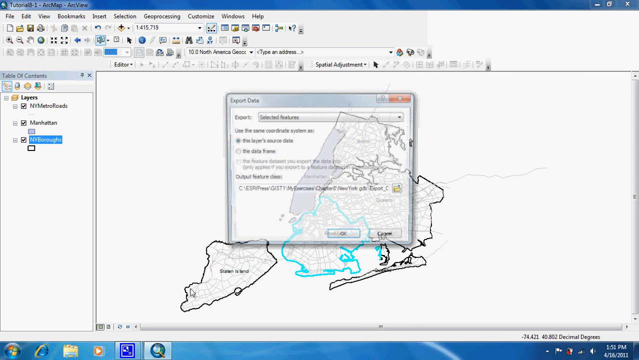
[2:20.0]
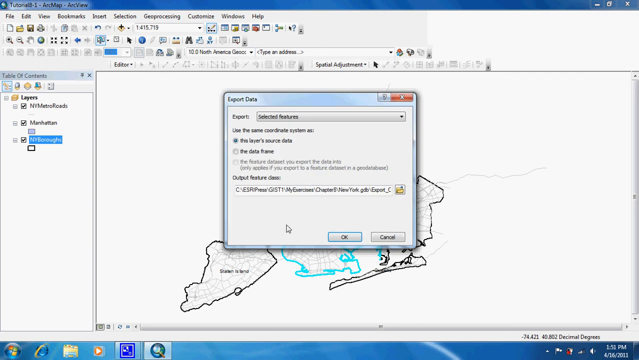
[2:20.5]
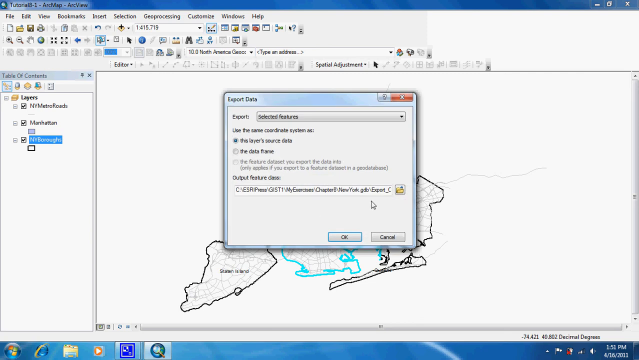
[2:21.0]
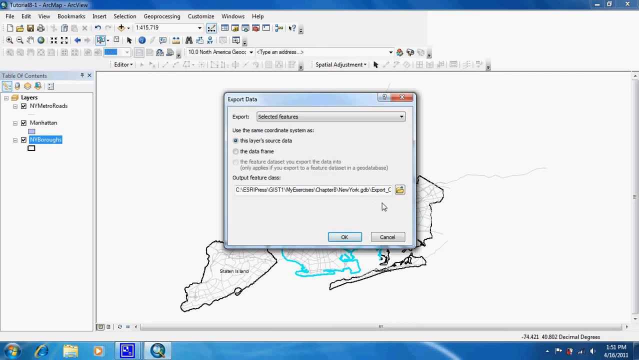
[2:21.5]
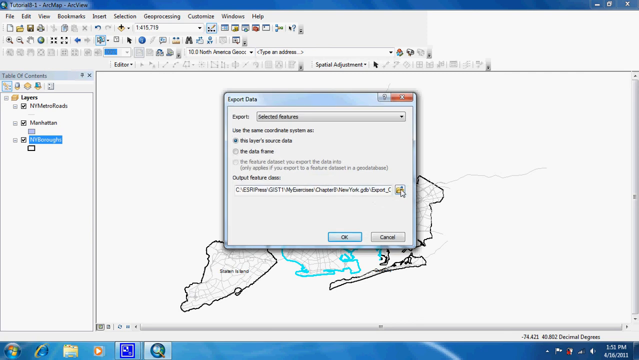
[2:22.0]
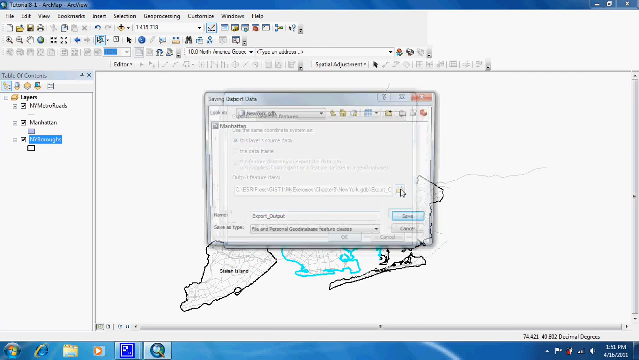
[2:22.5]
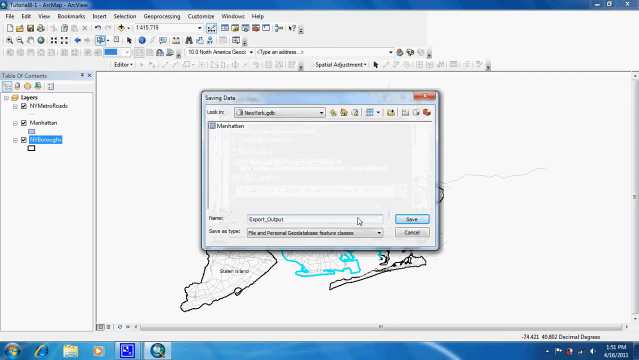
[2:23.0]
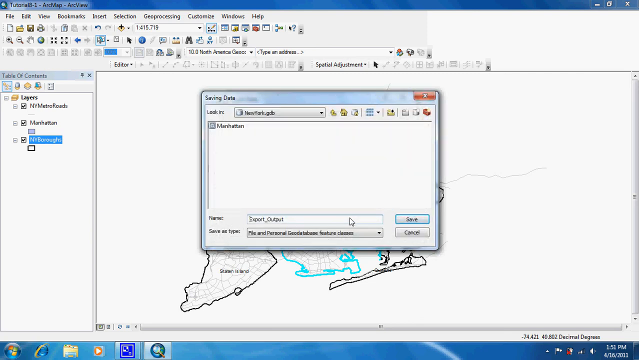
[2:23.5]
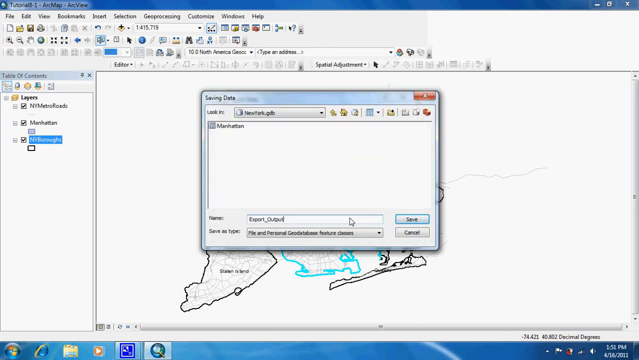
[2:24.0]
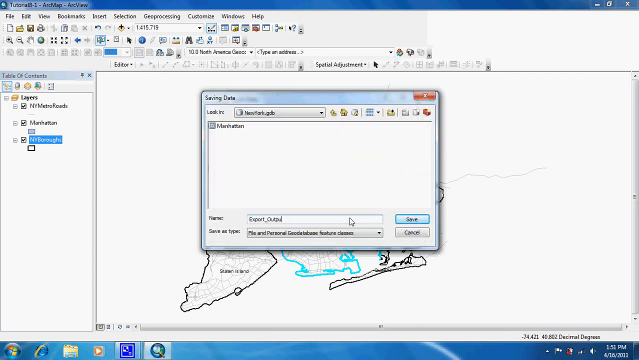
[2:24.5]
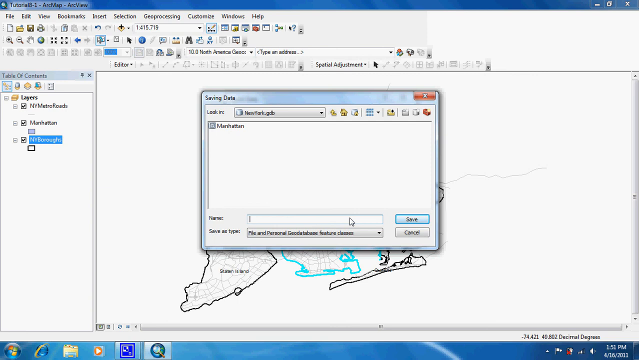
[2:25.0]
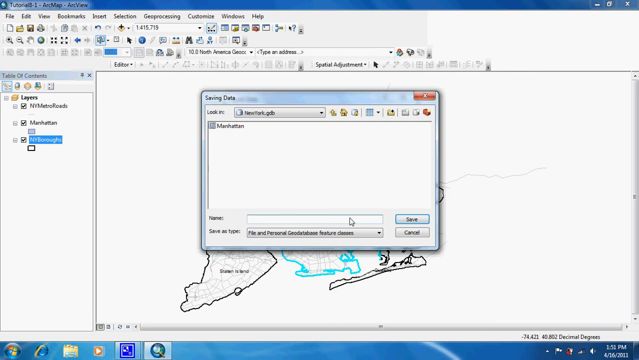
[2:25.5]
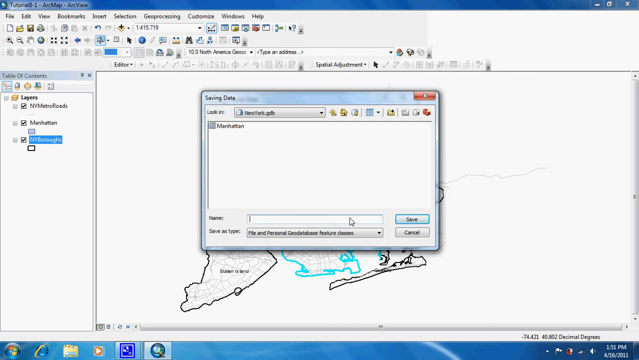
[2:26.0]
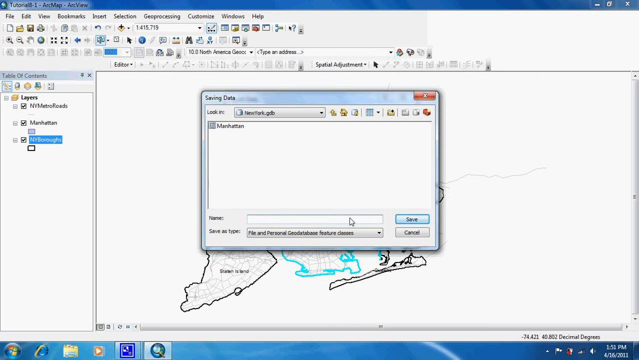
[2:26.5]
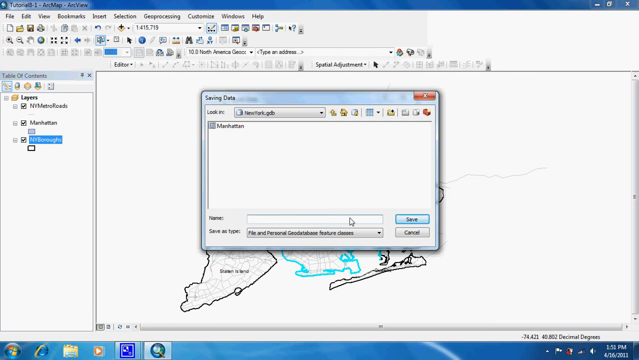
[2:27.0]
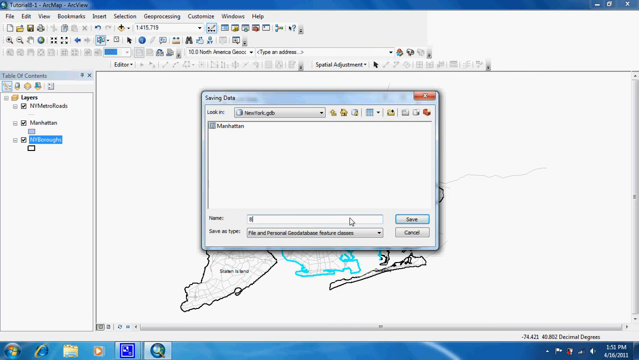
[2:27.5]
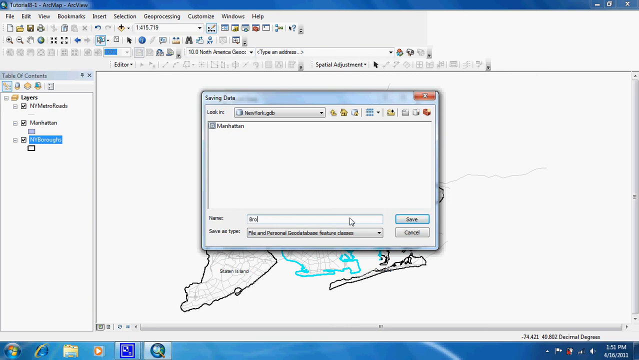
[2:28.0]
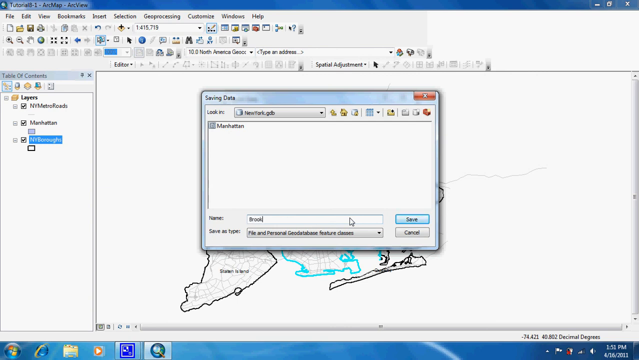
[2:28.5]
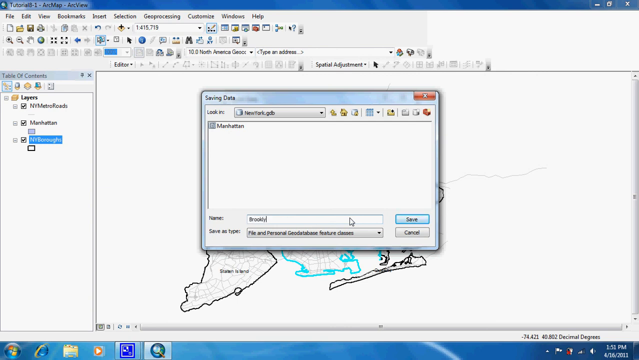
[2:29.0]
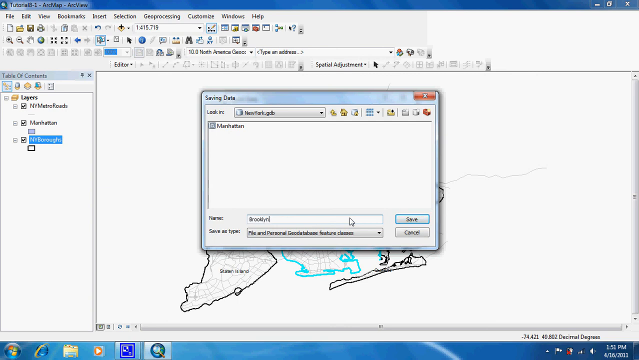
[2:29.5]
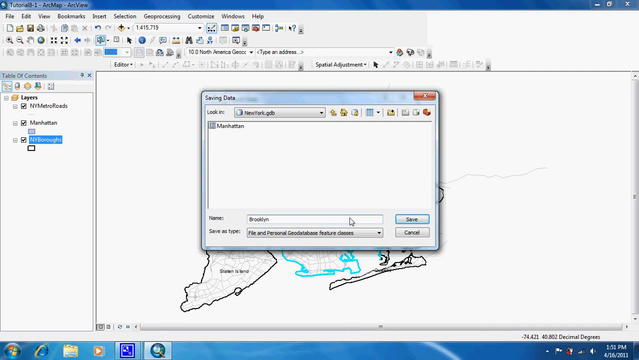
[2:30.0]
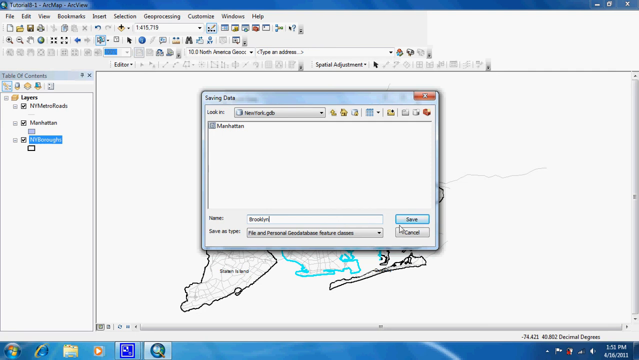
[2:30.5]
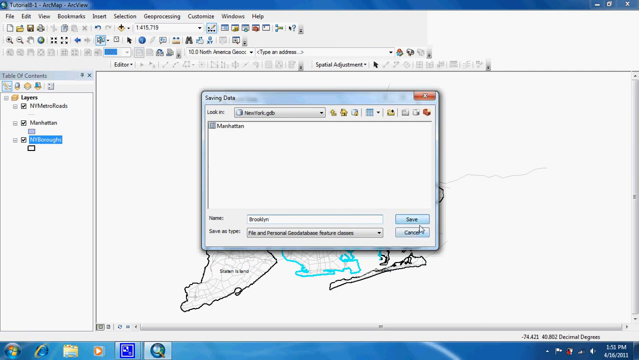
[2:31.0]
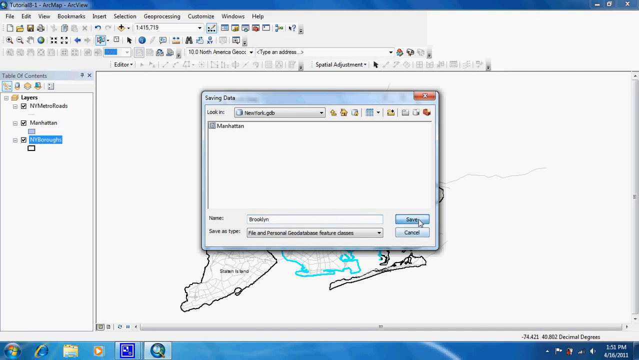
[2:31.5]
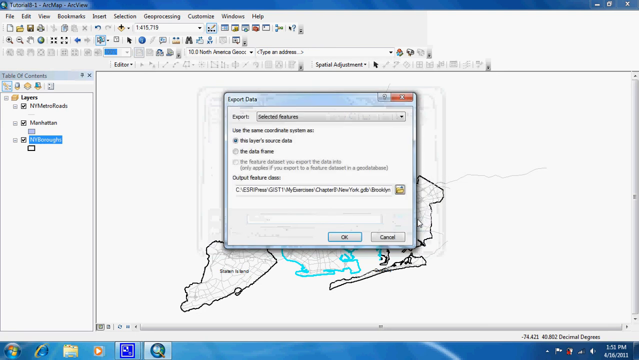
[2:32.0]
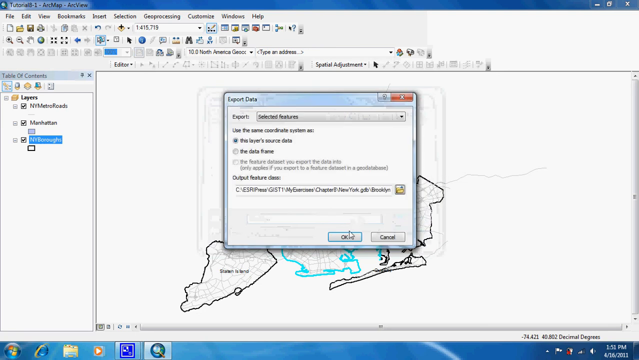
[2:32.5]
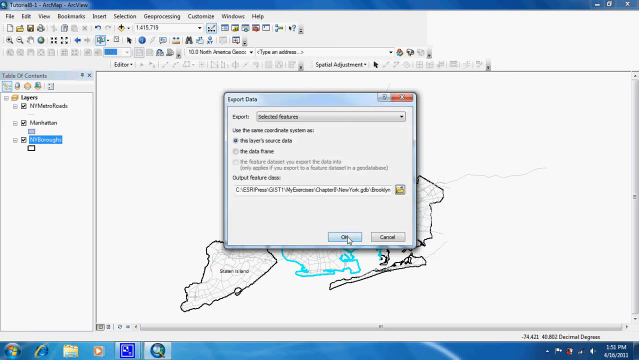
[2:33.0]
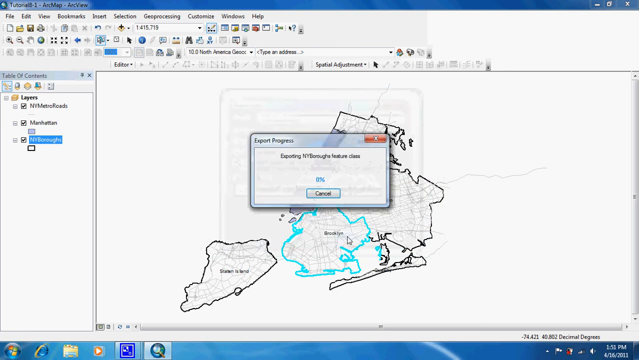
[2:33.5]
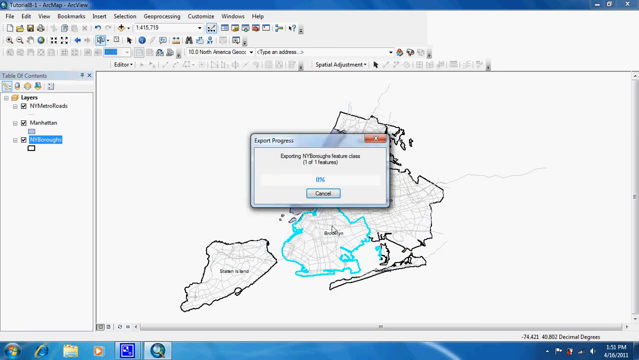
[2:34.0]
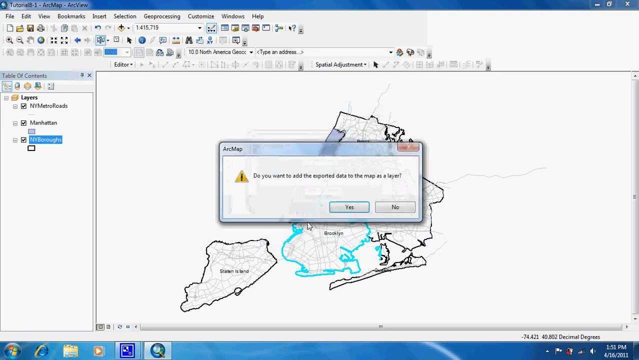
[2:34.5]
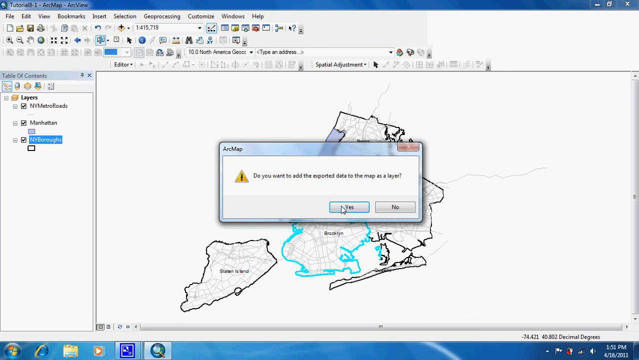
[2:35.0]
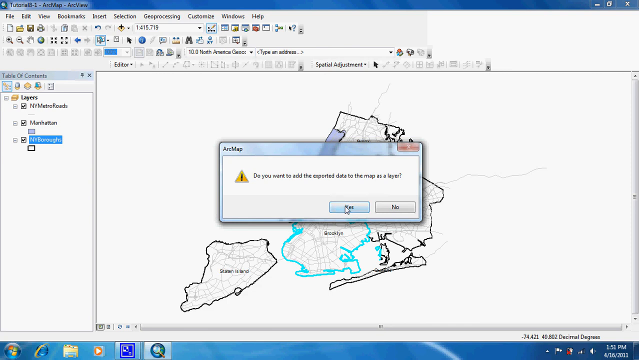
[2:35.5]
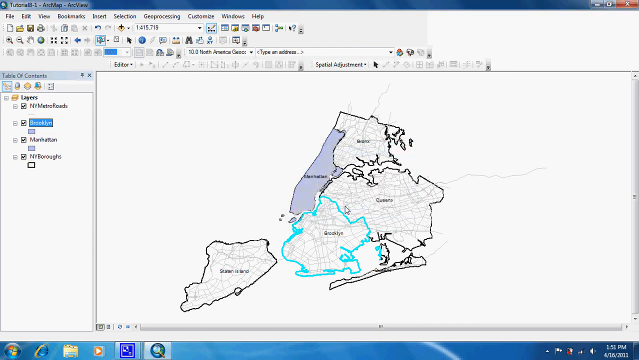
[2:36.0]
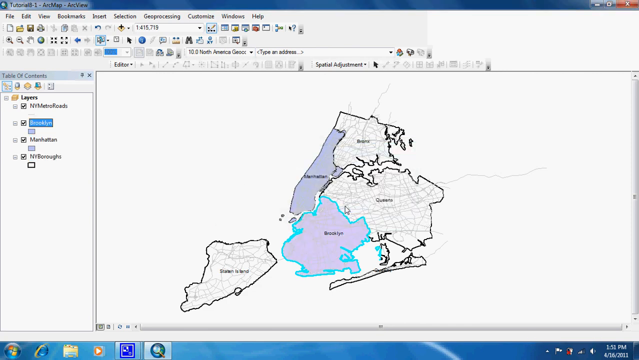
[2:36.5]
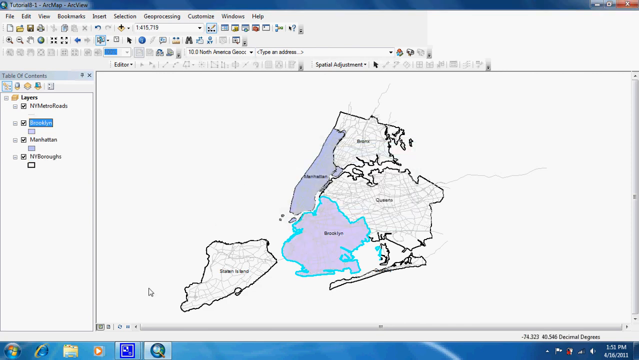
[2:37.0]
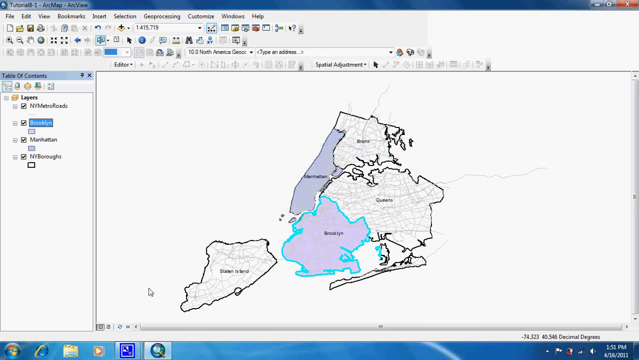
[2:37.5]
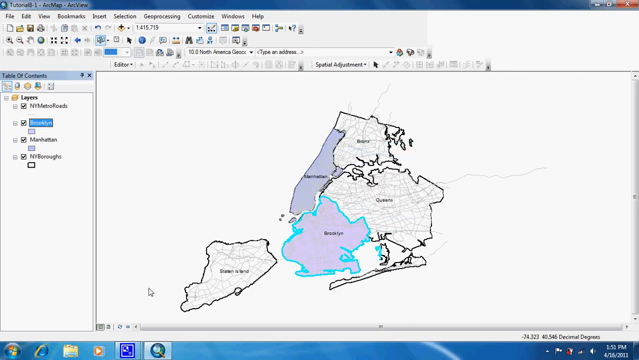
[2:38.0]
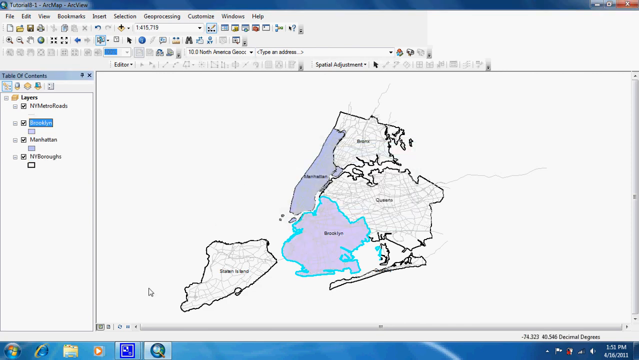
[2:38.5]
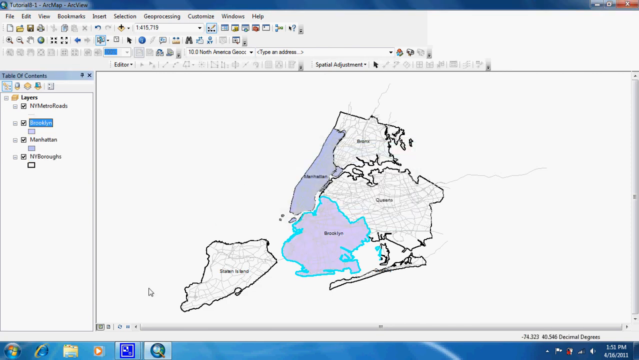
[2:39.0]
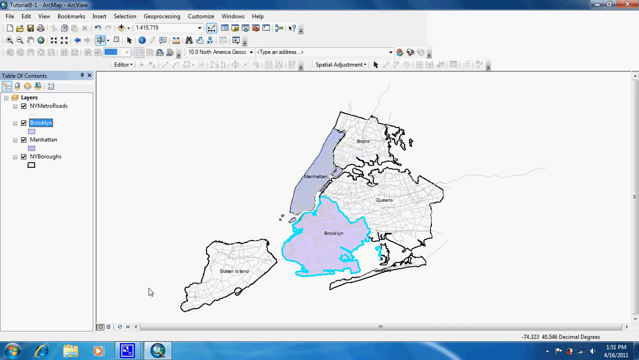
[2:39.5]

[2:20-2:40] A pop-up reads "Export Data" at the top. Beneath it is "Export" with a drop-down set to "Selected Features", some radio buttons, and on the bottom another drop-down reading "Output Feature Class". The Feature Class option is clicked and a saving data window appears, looking in the New York.gdb directory. The file is named Brooklyn and the Save button is clicked, returning to the Export Data window, where OK is clicked. The data exports, and a prompt asks whether to add the exported data to the map as a layer; Yes is clicked. Brooklyn turns a very light purple, almost lavender, with its borders still highlighted in teal. The screen stays on this view for a while.